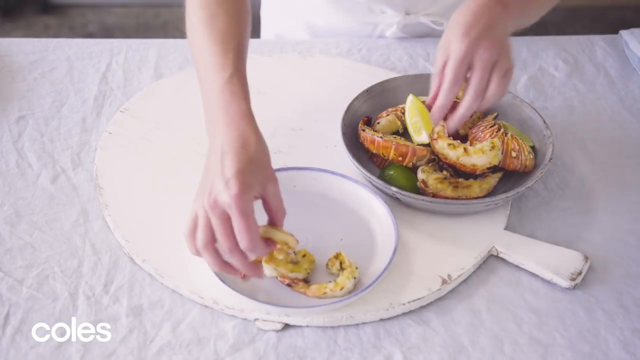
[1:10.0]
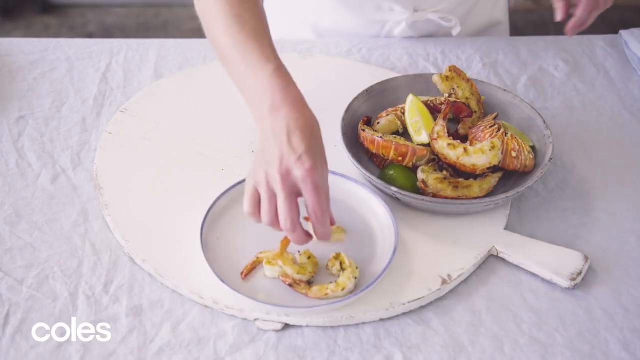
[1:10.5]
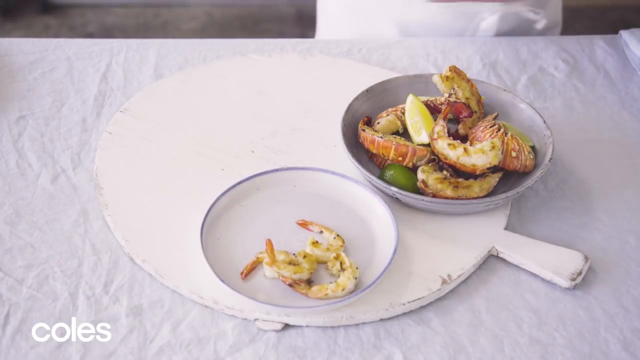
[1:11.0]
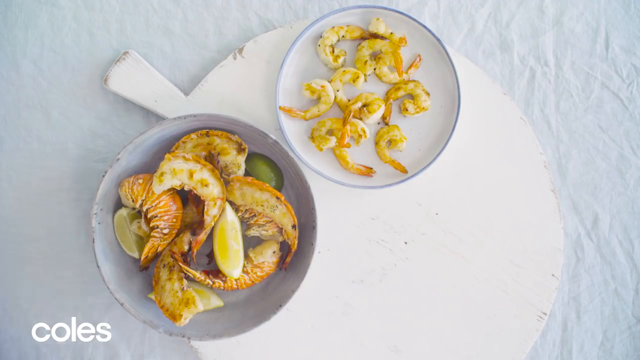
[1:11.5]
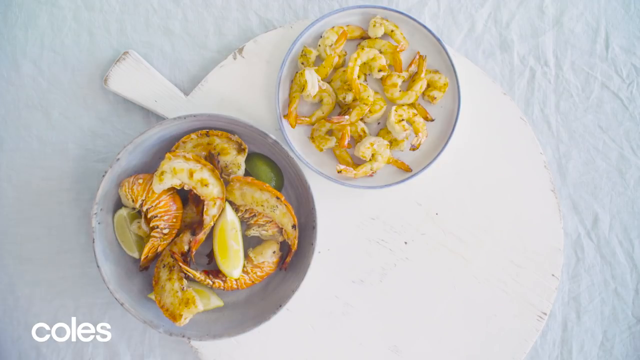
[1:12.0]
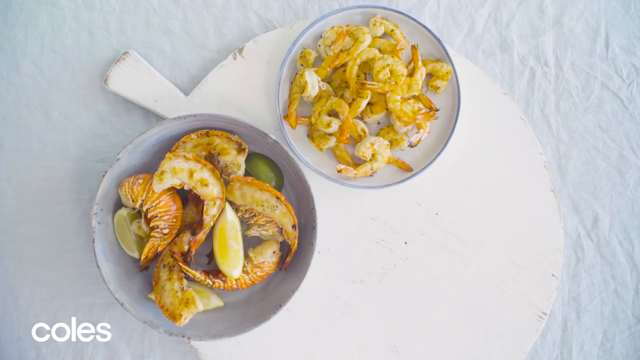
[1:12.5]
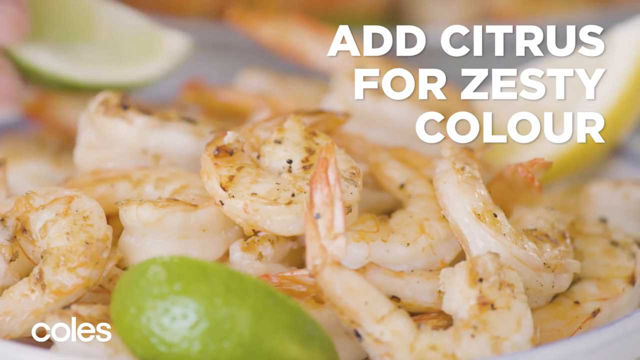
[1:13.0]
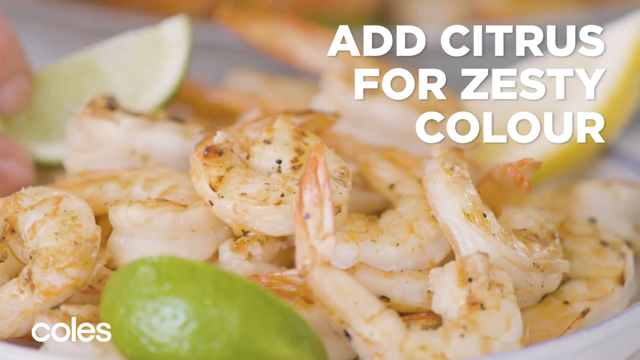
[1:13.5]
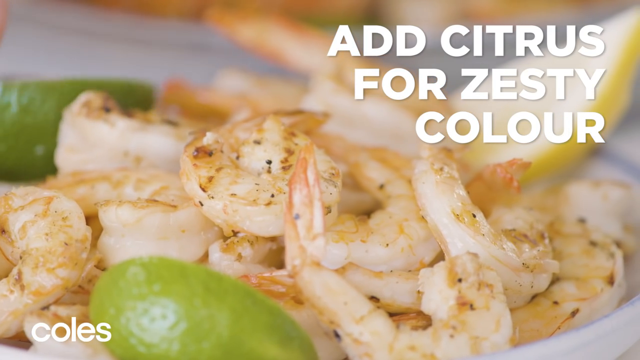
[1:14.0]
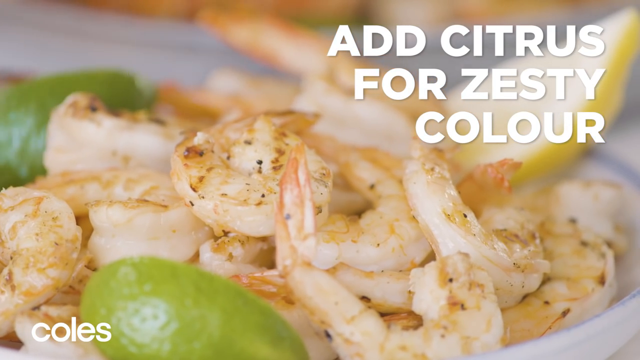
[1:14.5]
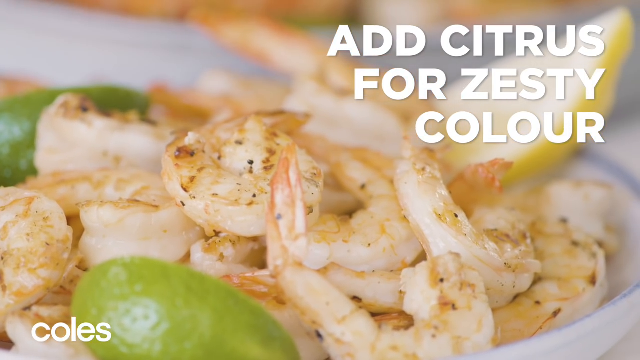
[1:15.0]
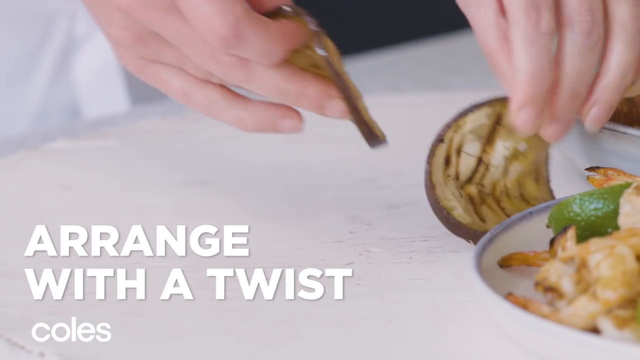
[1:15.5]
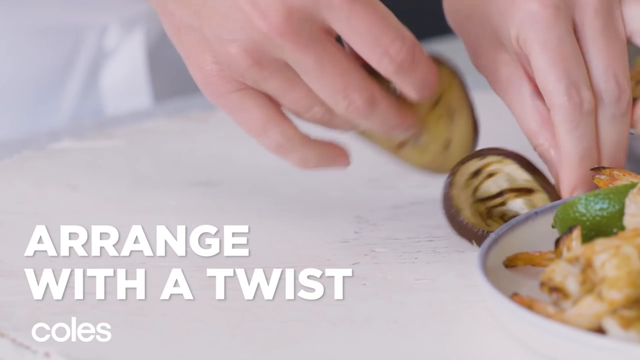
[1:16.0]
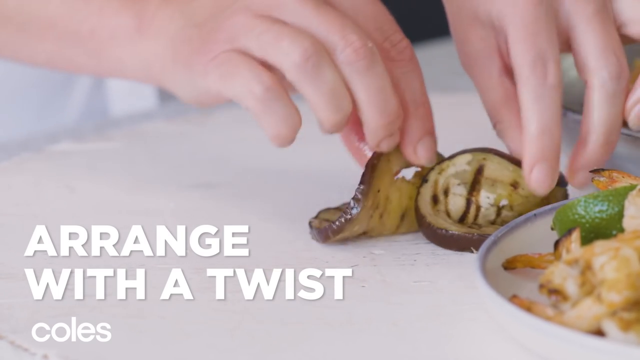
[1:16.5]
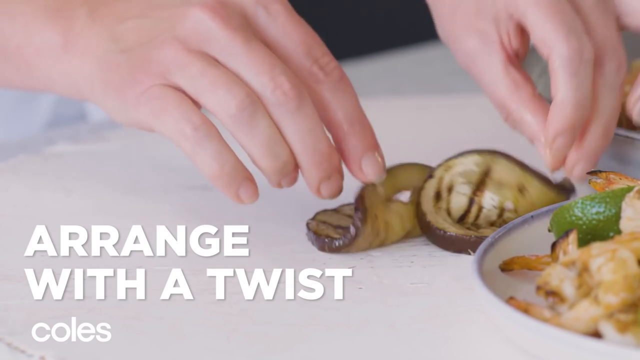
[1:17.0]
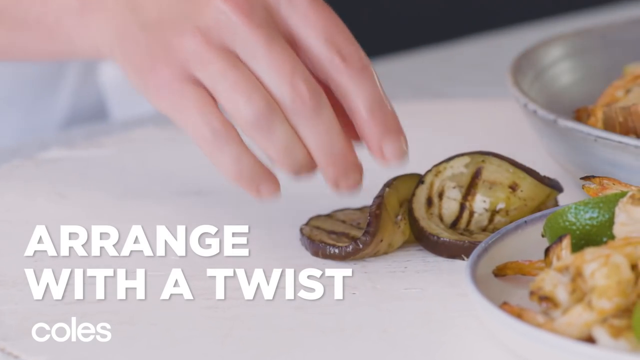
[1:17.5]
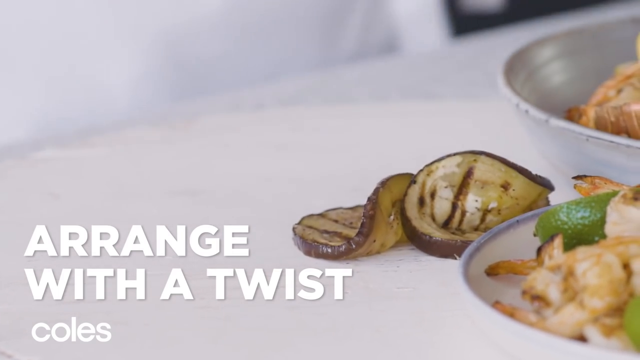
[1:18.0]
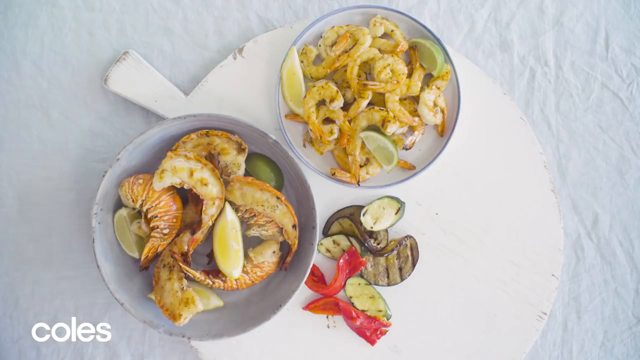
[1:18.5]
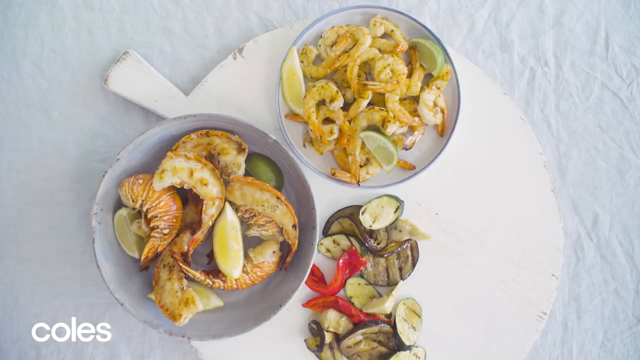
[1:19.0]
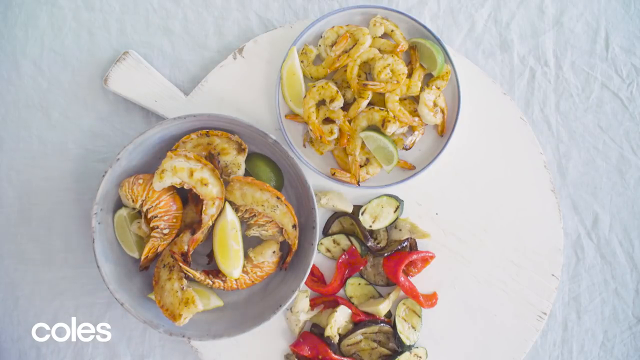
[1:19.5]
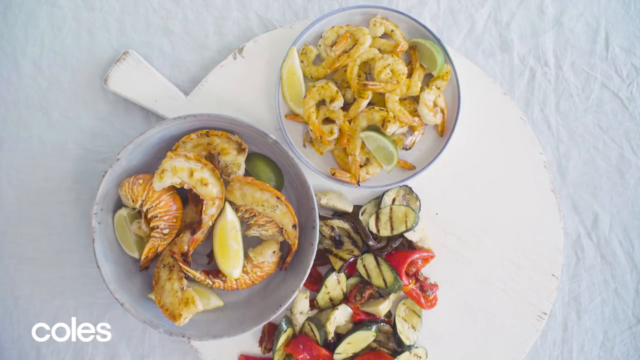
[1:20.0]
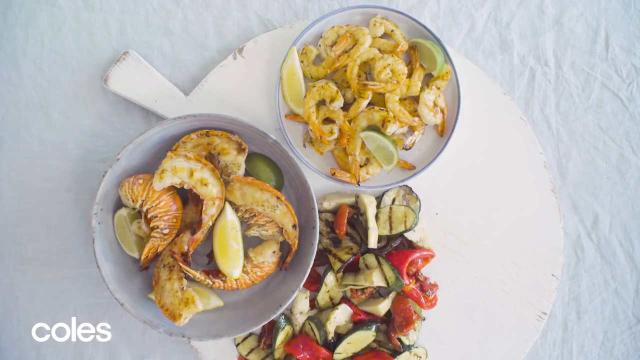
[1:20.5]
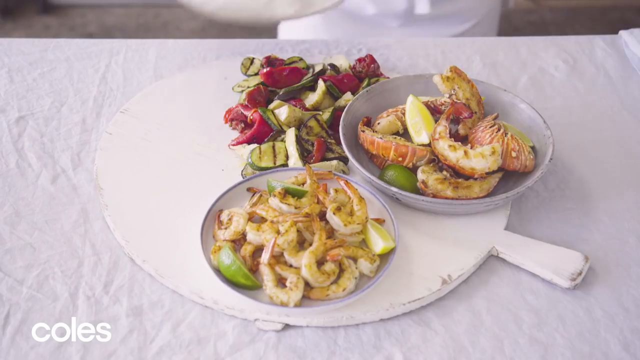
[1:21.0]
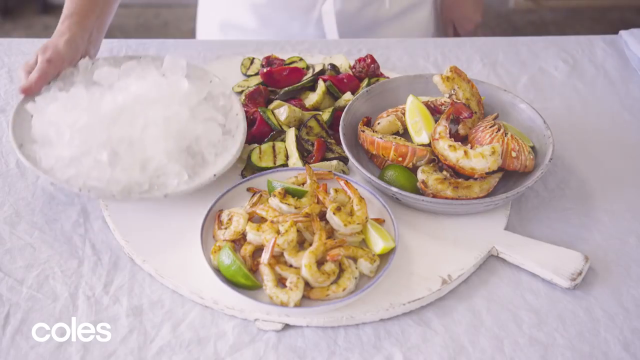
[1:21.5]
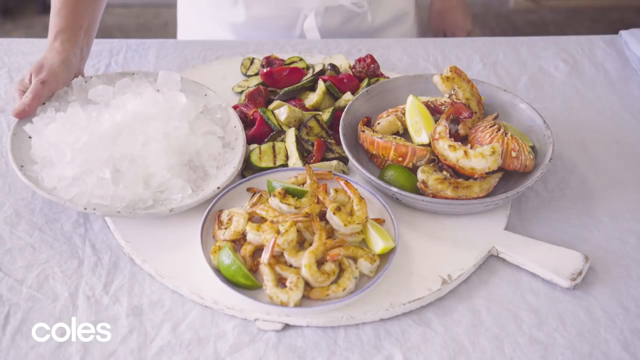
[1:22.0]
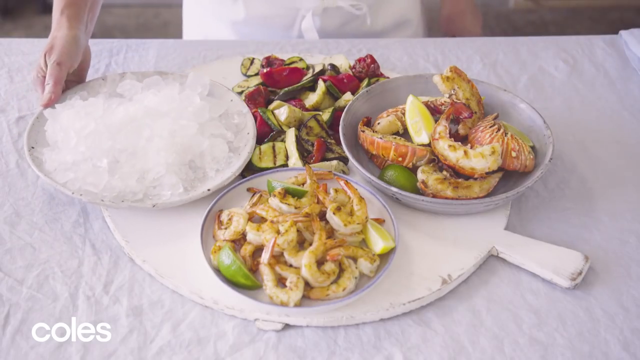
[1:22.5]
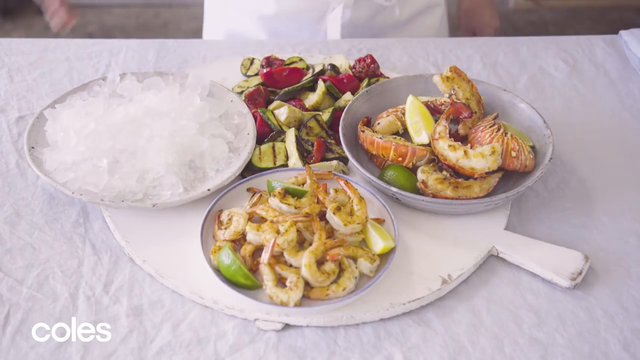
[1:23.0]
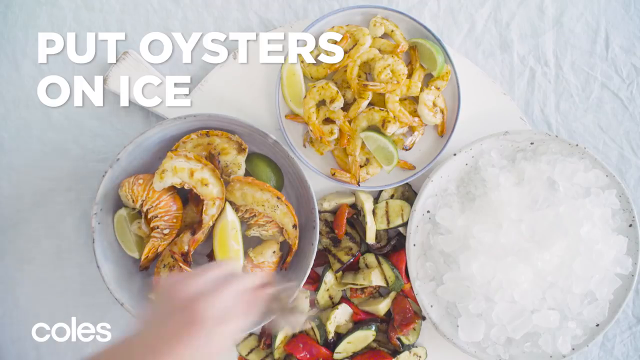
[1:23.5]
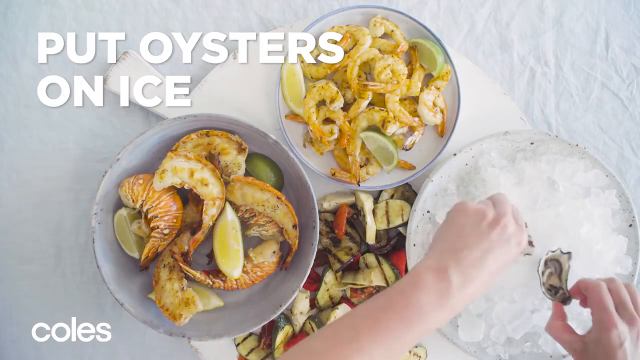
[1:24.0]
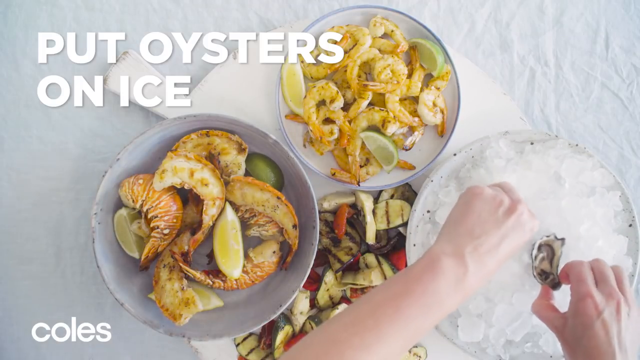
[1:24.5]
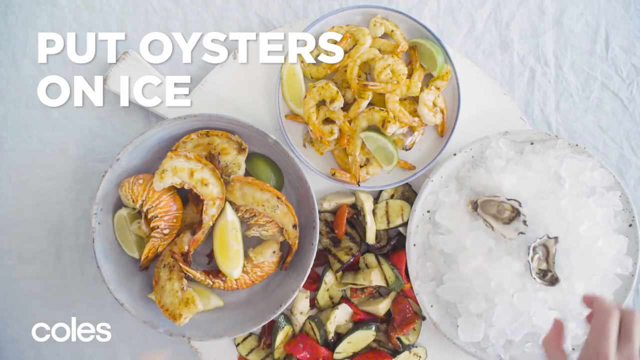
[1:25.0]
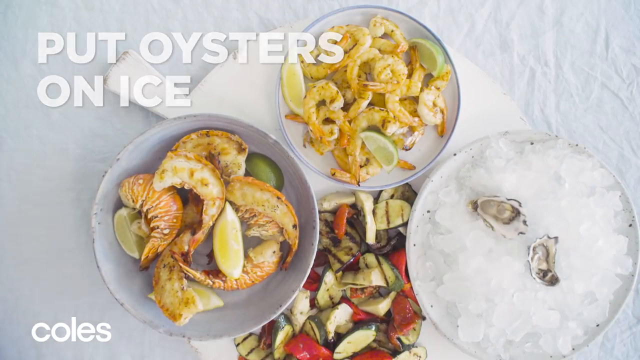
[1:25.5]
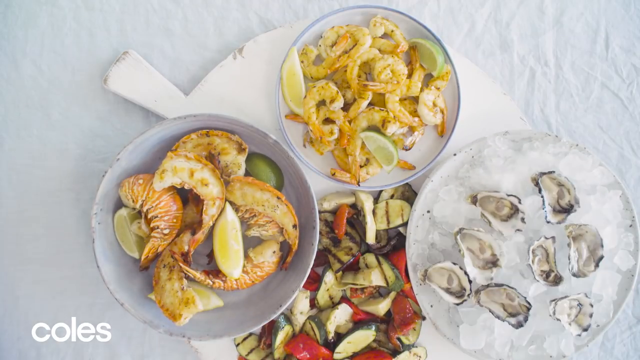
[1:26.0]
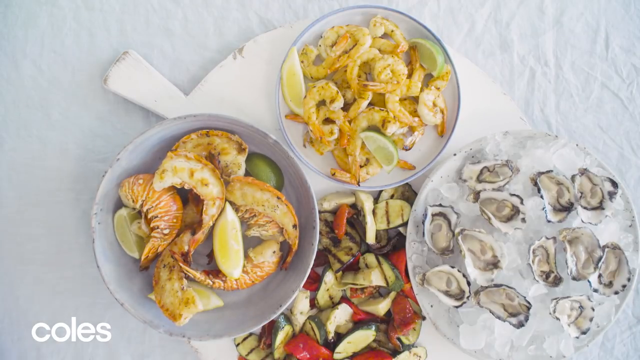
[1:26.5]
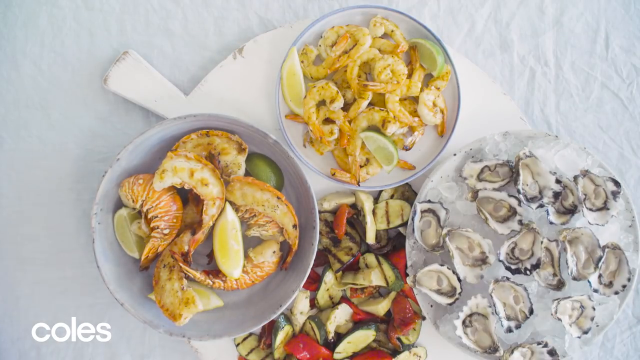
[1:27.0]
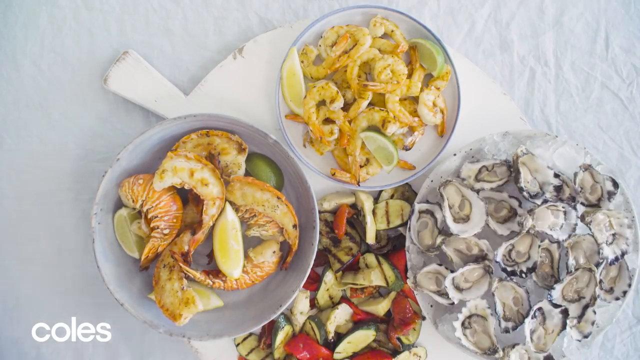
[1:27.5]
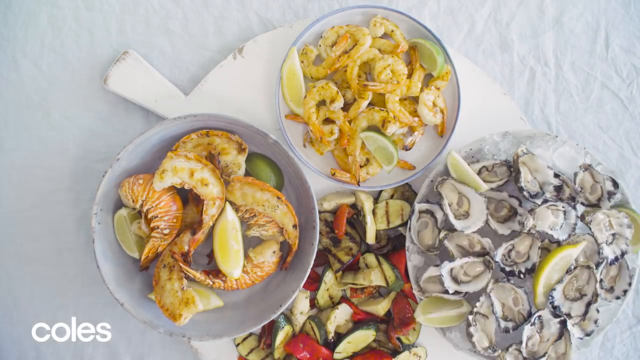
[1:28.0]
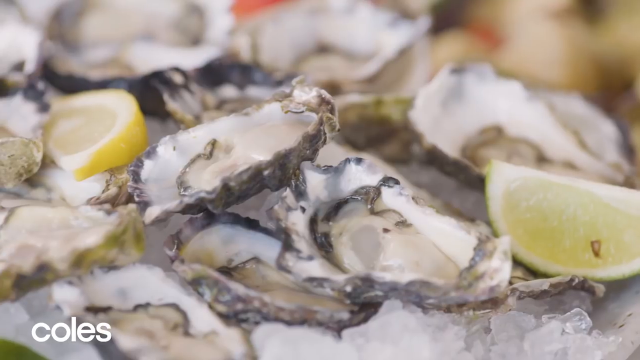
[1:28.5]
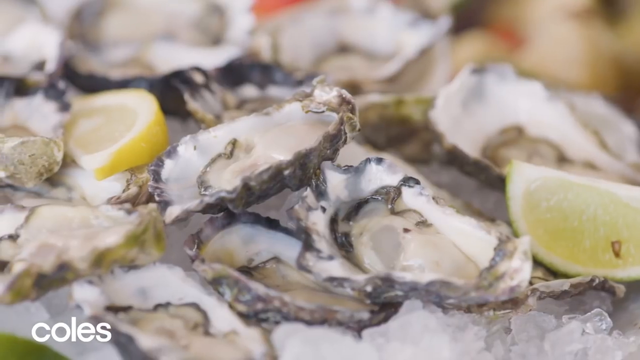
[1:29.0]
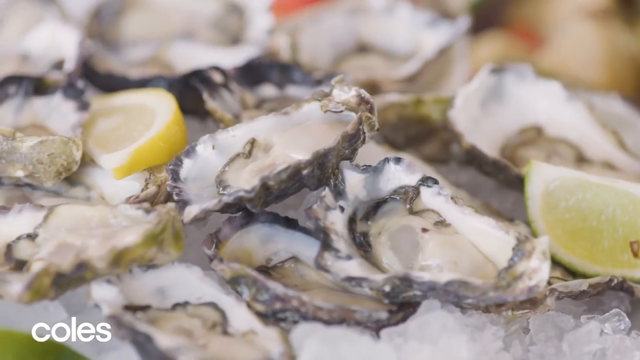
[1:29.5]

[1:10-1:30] The platter continues to be assembled as lobster tails are put into a silver bowl, shown from the top down frame by frame. A close-up of the lobster tails follows with the caption "add citrus for a zesty color" as limes and lemons are added. Next comes "arrange with a twist" as more little vegetables are put in the middle of the platter between the bowls. A big bowl of ice is put on the last space of the platter, with captions to put oysters on the ice. From the top down, the person's hands put the oysters in the ice, shown frame by frame, and limes and lemons are thrown in as well. Once the platter has come together, the video shows views of it, including a close-up of the oysters in the ice with the lemons.